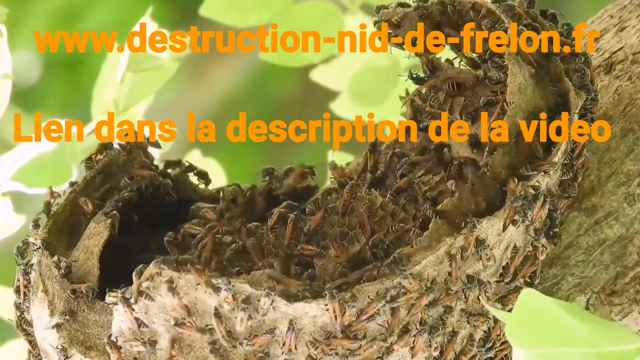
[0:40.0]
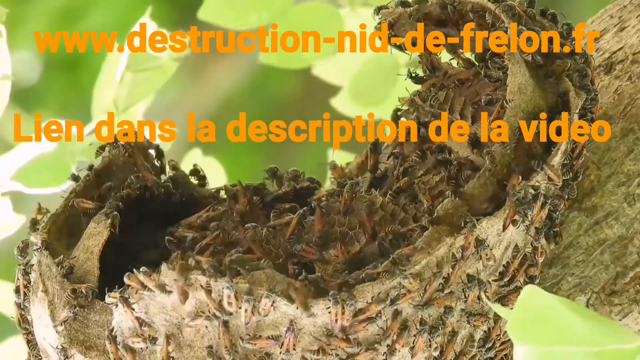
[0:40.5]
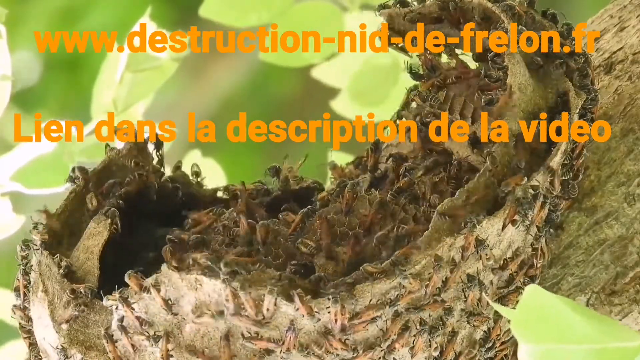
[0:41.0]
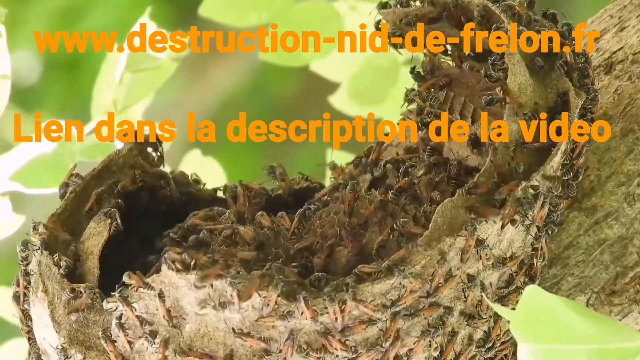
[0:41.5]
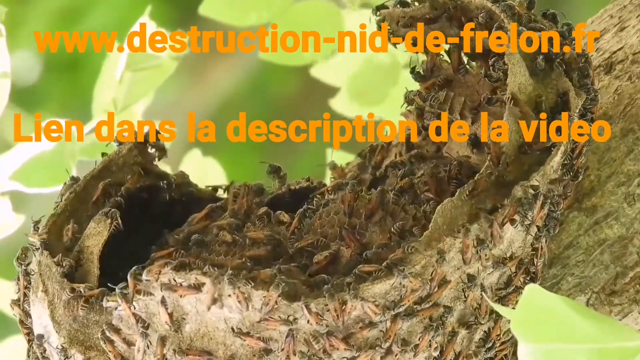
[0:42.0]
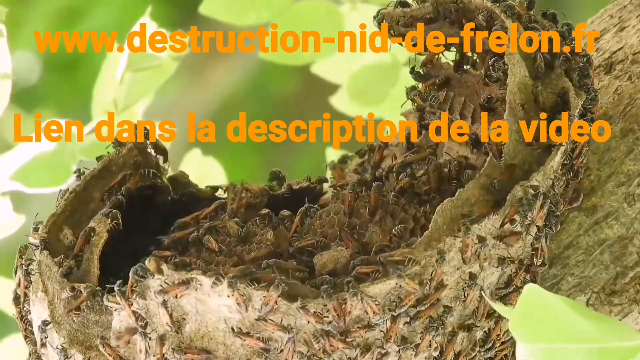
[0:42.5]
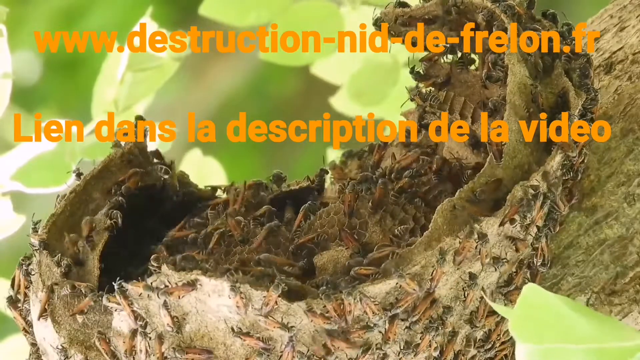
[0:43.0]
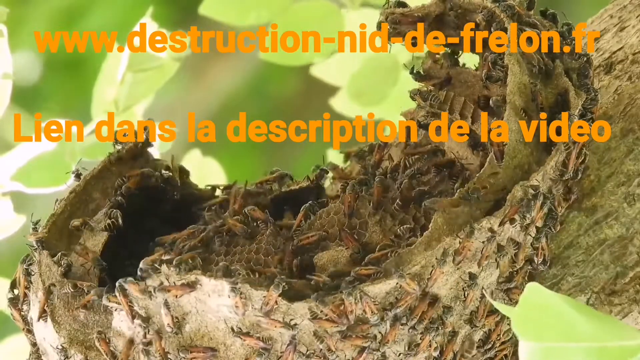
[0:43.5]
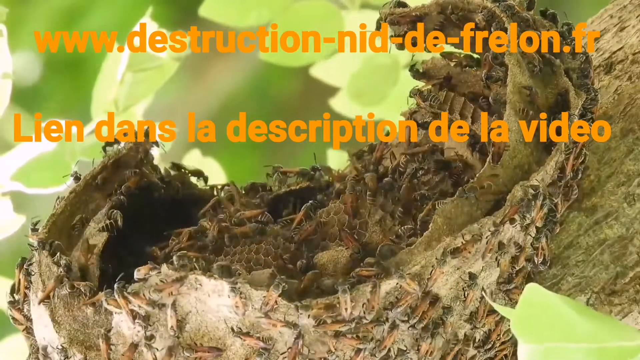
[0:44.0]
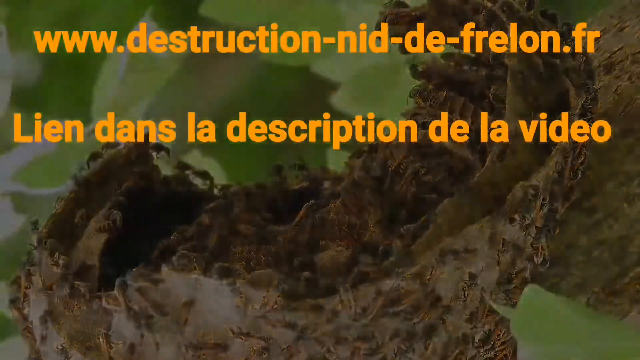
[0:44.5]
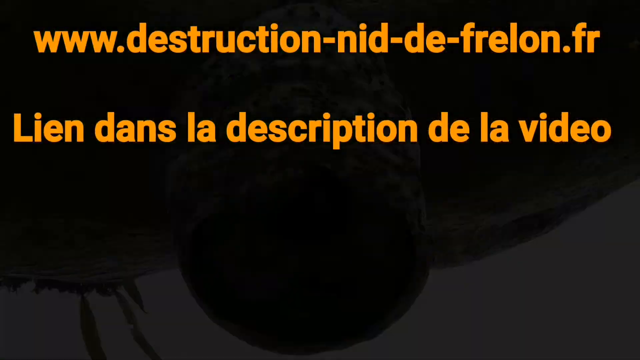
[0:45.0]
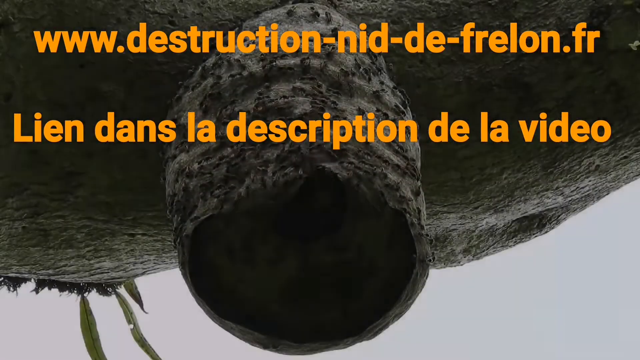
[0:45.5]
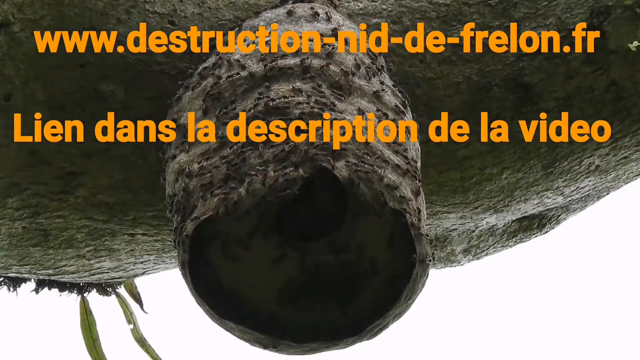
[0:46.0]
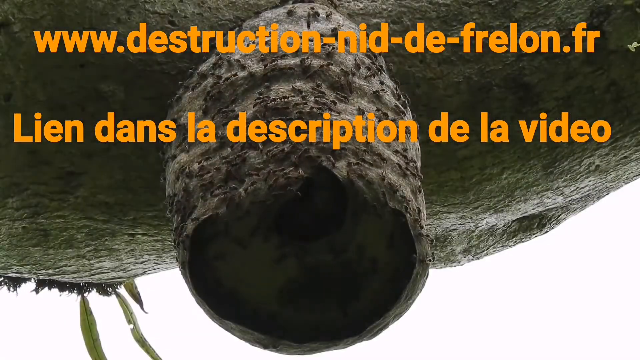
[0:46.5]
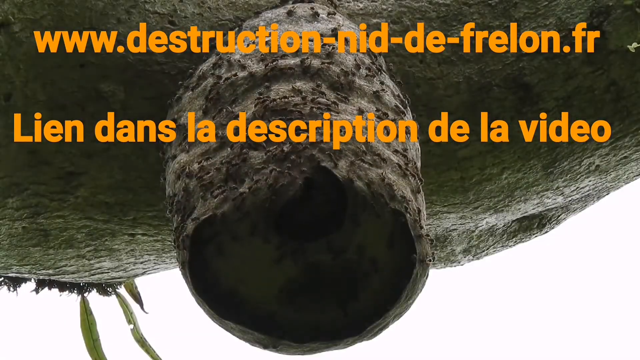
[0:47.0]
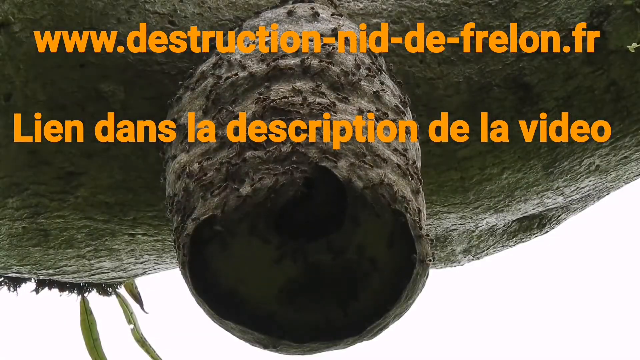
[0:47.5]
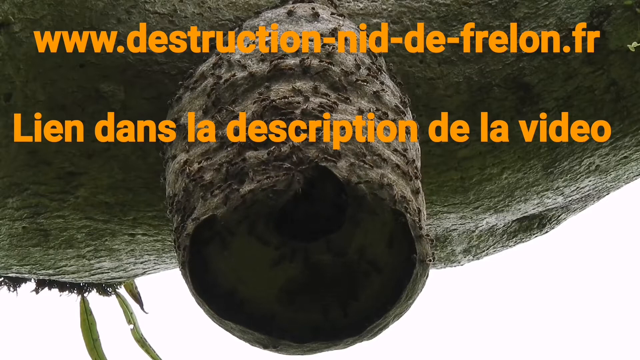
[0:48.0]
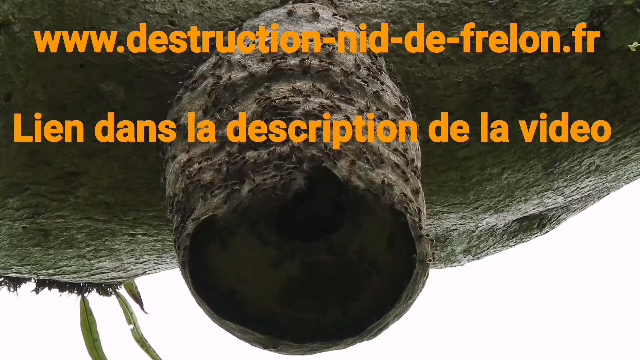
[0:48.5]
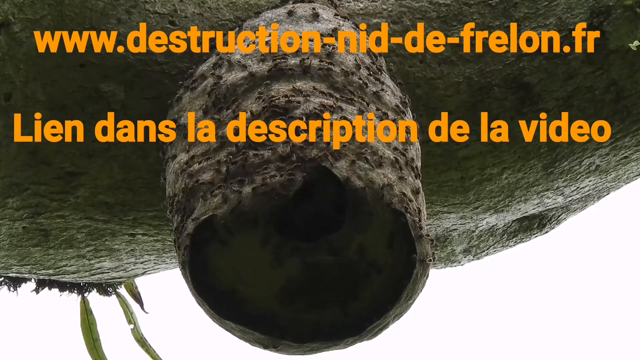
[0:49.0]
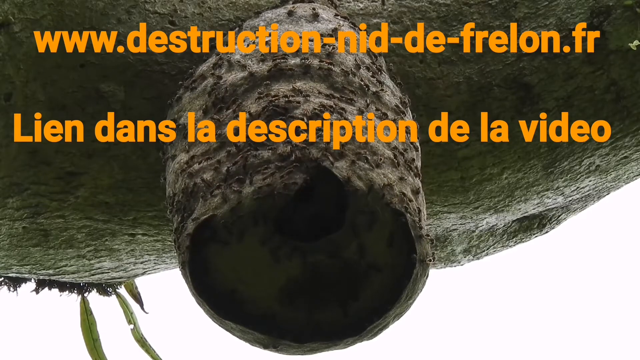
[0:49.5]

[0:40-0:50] What seems to be a broken-down hornets' nest is on a tree trunk. The nest is open, and lots of hornets crawl all over it; they are brown, blending perfectly with the brown tree bark. Pale green leaves are in the background. A website and some other text in orange, in French, are written across the front of the video. The creatures keep swarming over the nest. Then a different view shows what seems to be a nest structure attached to another structure, with hundreds and maybe even thousands of the creatures swarming all over it.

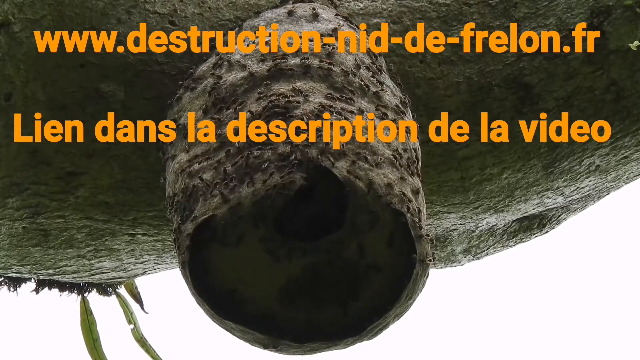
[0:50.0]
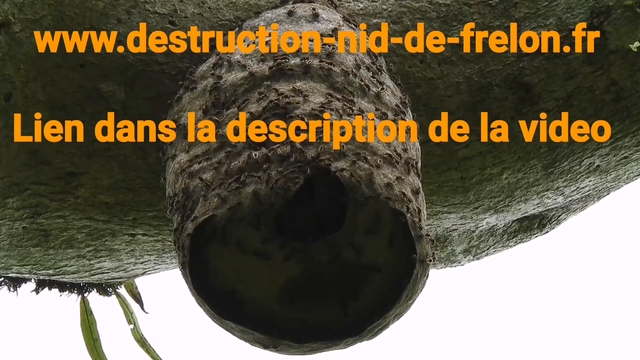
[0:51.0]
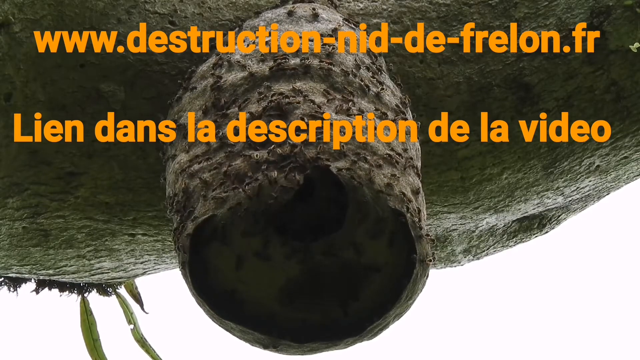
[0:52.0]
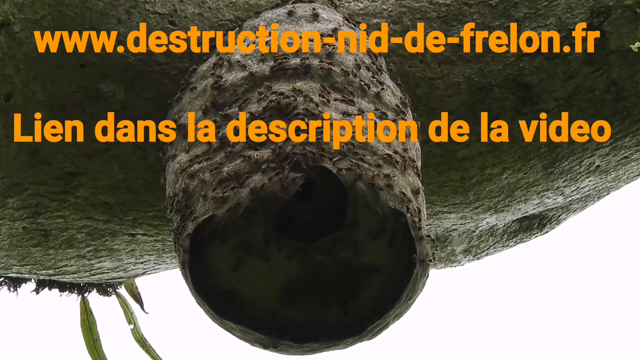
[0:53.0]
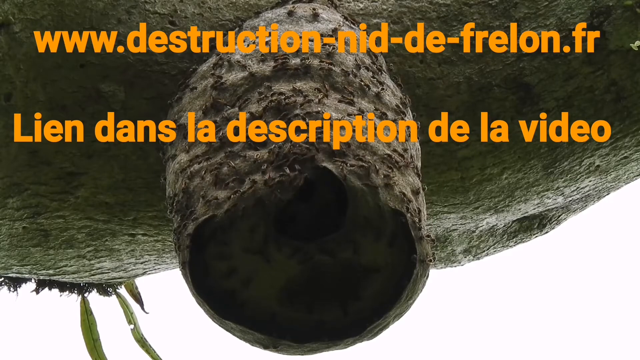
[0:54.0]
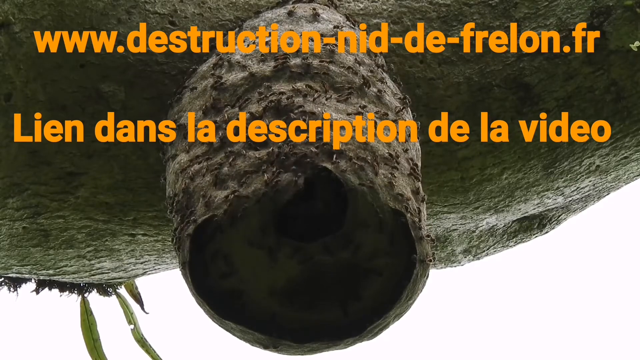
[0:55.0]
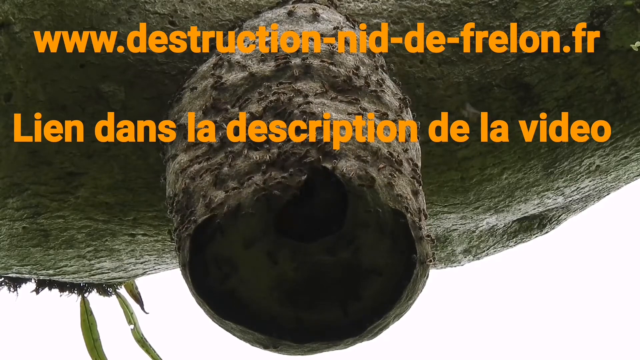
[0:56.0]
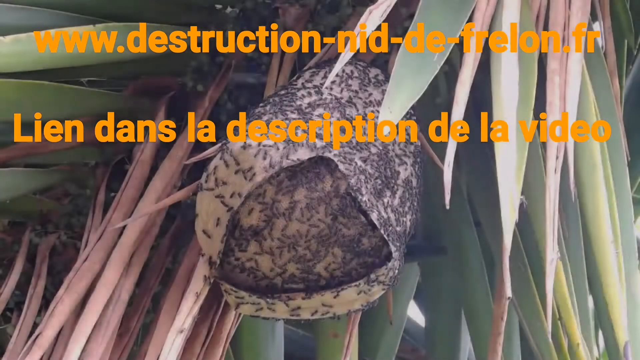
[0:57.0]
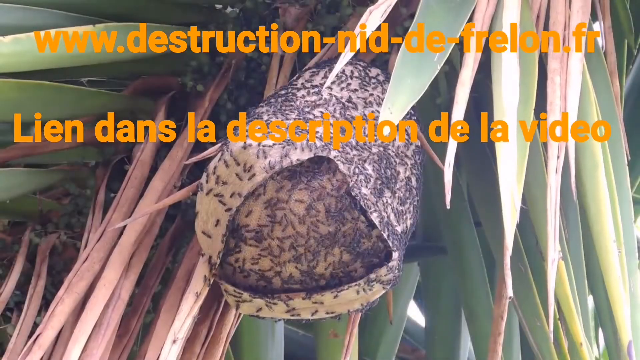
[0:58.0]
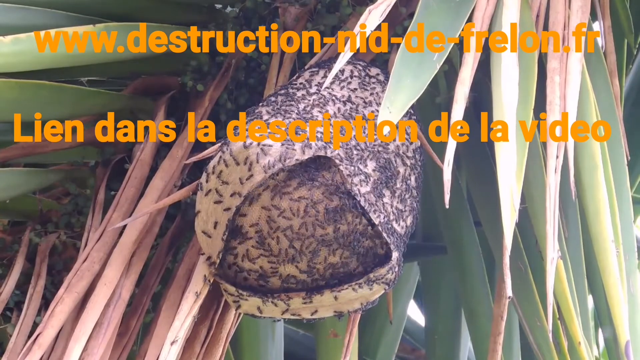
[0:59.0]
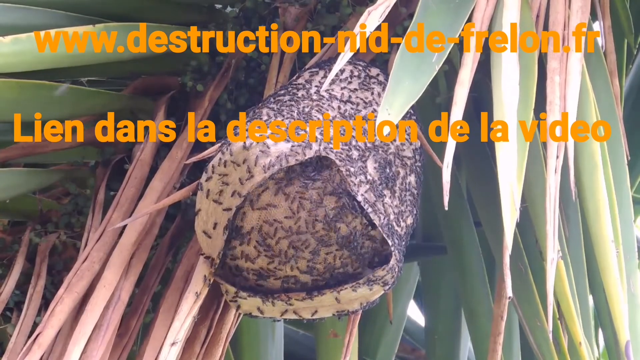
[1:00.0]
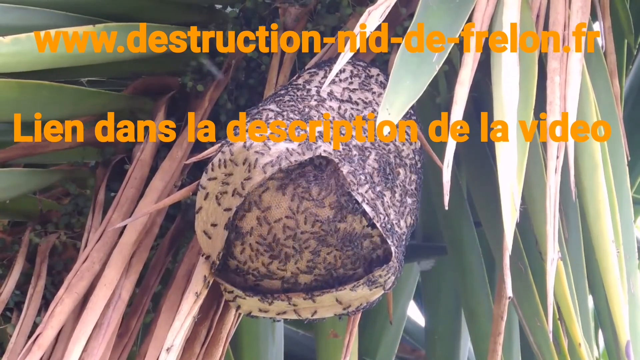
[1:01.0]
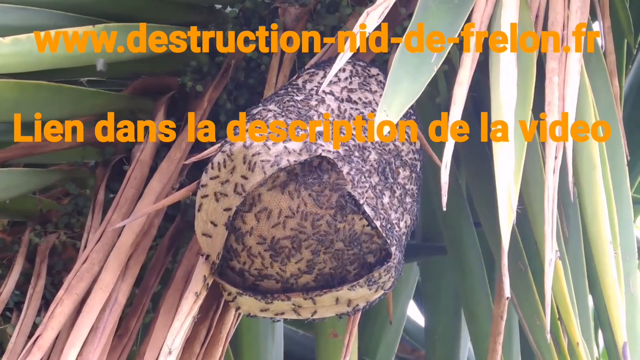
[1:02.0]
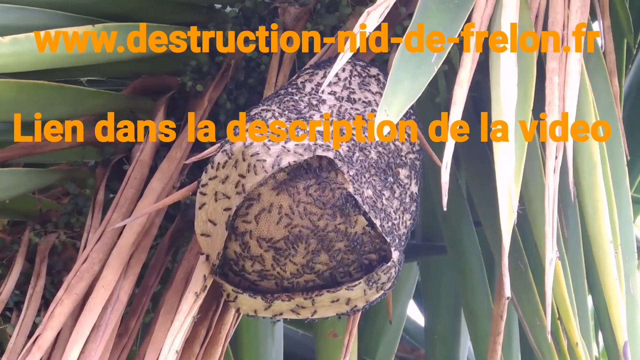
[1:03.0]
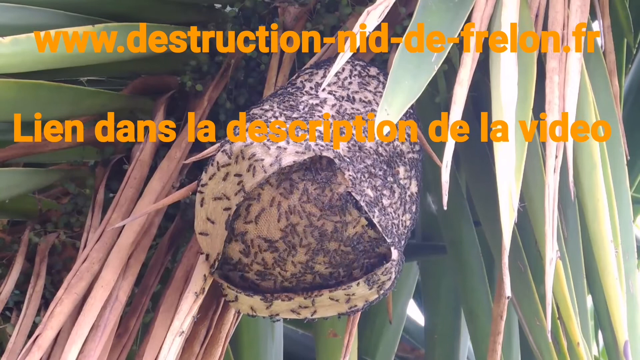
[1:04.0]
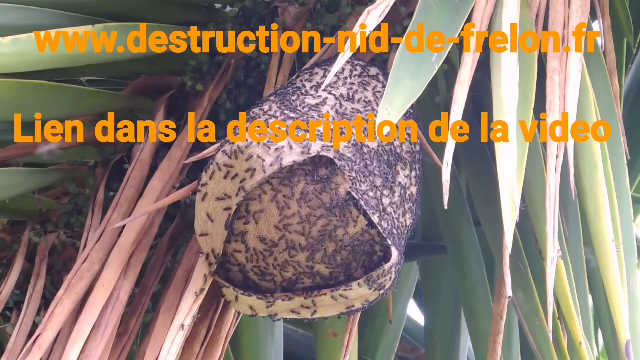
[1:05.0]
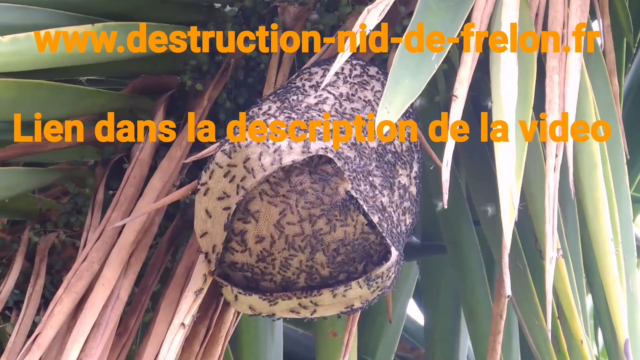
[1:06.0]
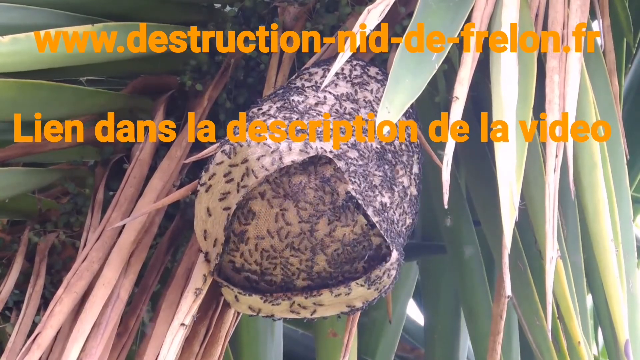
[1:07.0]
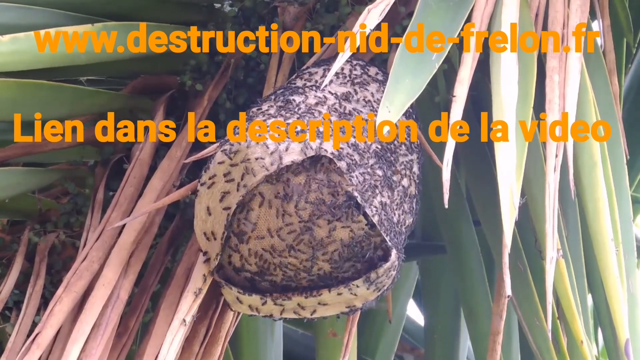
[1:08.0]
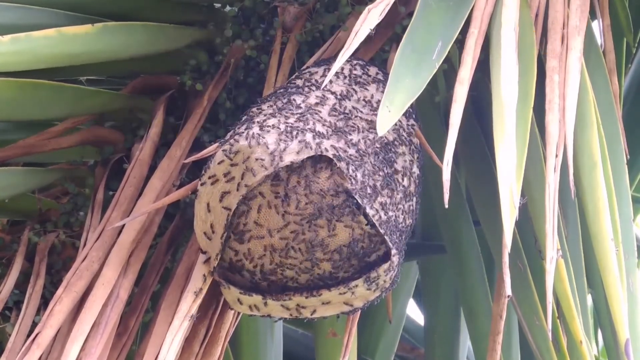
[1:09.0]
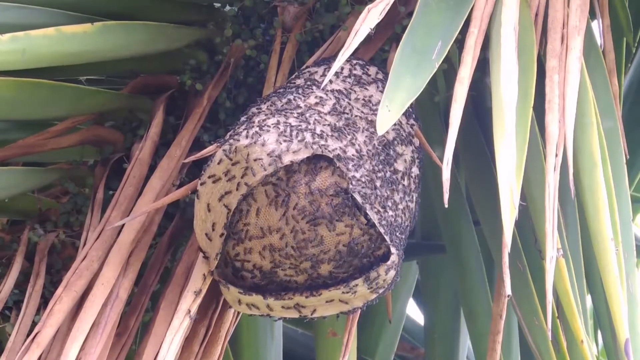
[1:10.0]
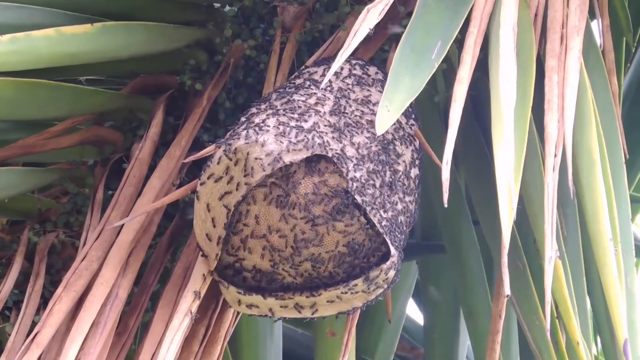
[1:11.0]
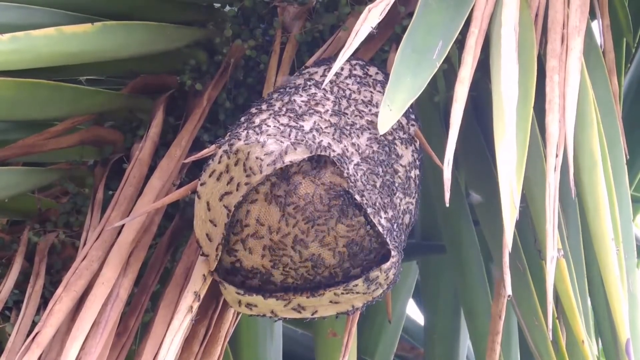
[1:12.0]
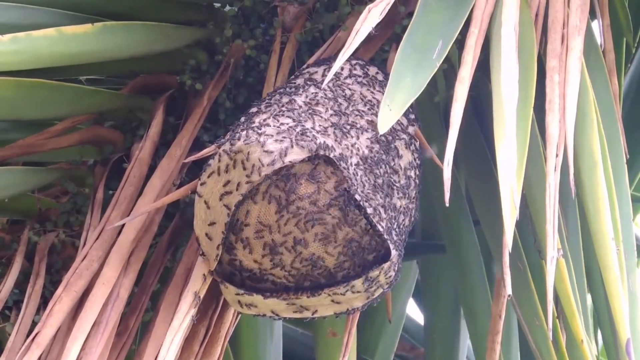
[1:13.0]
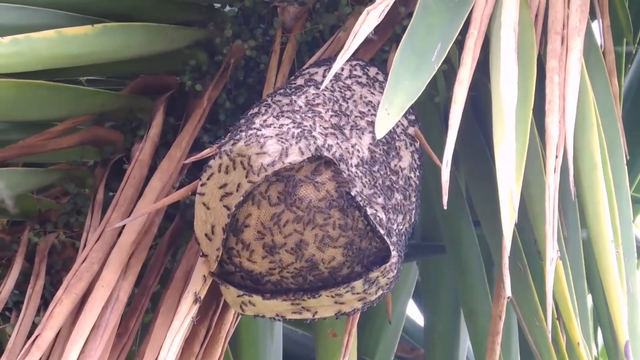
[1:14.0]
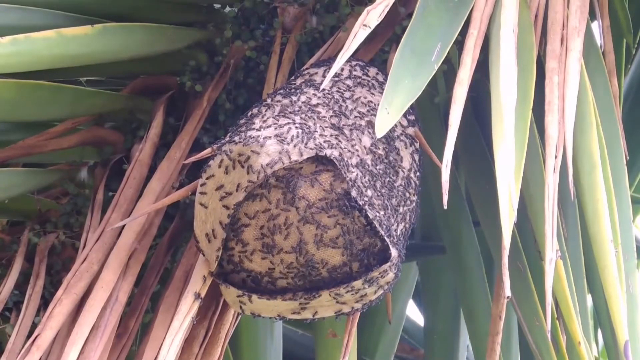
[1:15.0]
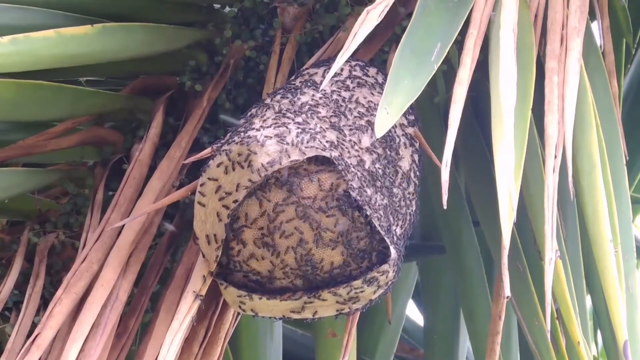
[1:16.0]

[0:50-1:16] A nest of hornets, or creeping creatures of some sort, is attached to a place. The creatures swarm all over the nest, too many to count: hundreds, if not thousands, flying and buzzing all over. They are dark brown. Around them is what looks like palm leaves hanging down. Written across the screen in orange, in French, are a website and the title of the video. The title reads "Endons la description de la video" and the website reads "www.destructionneddefrelon.fr". The video seems to depict how to destroy nests of swarming creatures such as hornets and other flying insects.